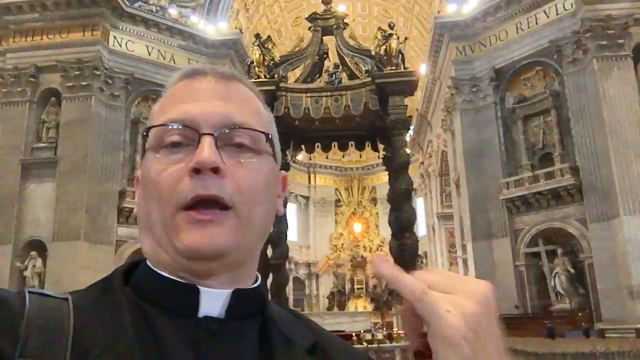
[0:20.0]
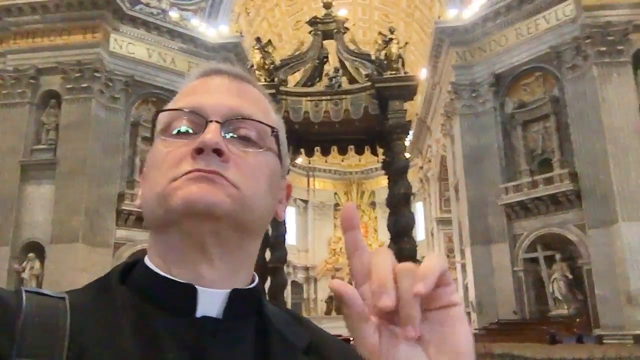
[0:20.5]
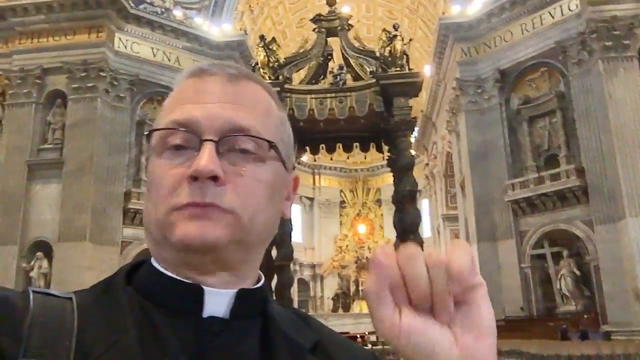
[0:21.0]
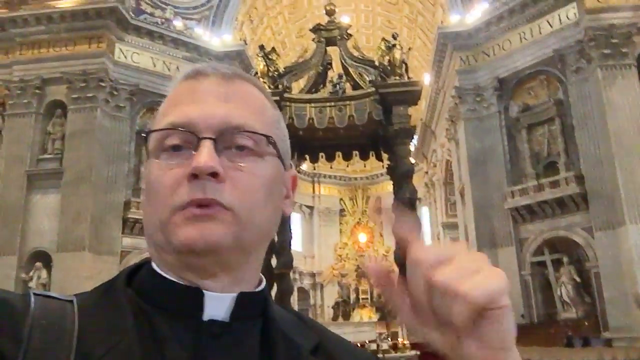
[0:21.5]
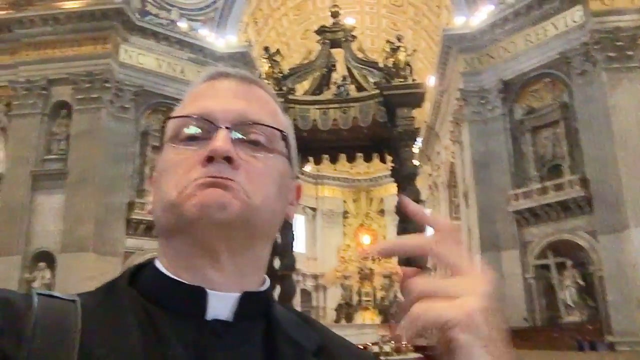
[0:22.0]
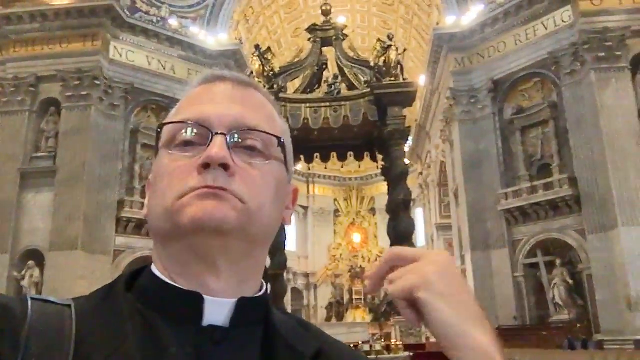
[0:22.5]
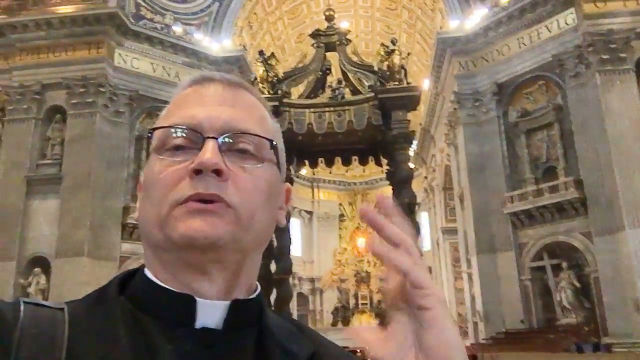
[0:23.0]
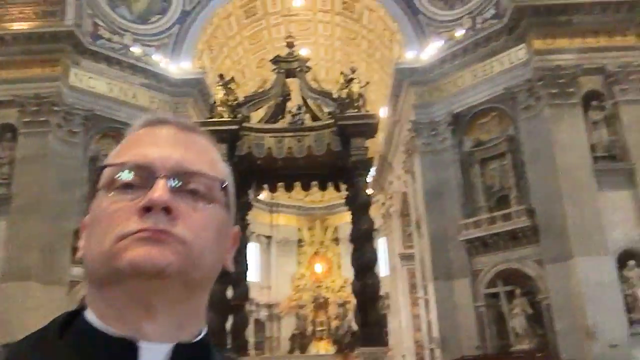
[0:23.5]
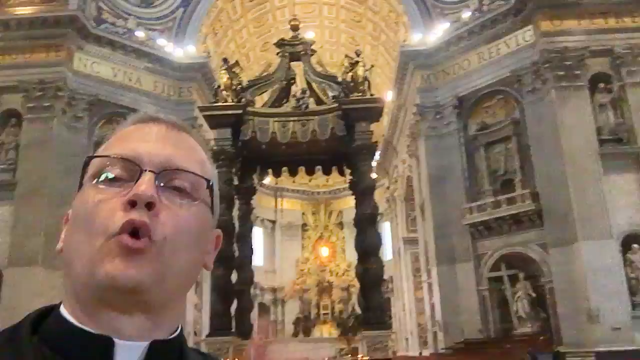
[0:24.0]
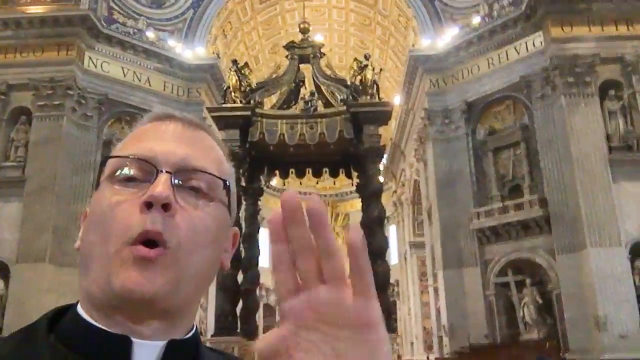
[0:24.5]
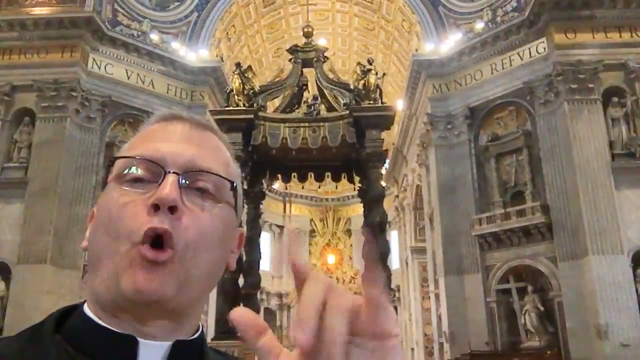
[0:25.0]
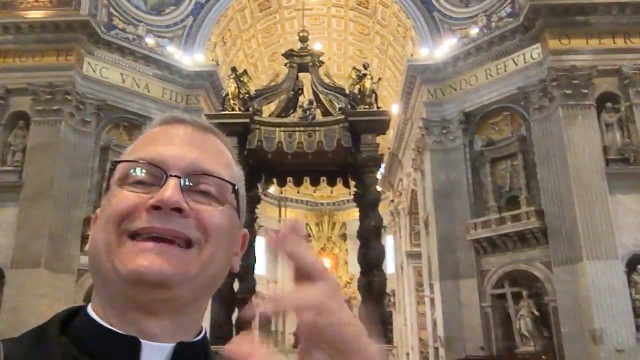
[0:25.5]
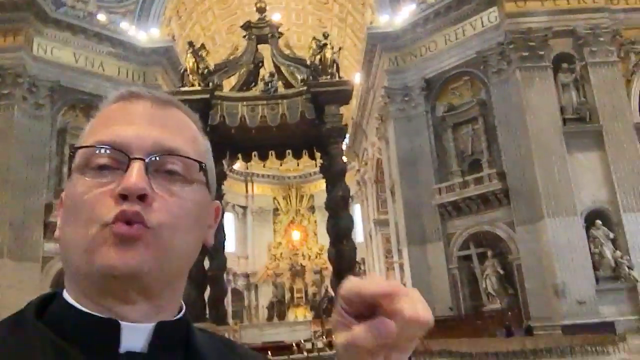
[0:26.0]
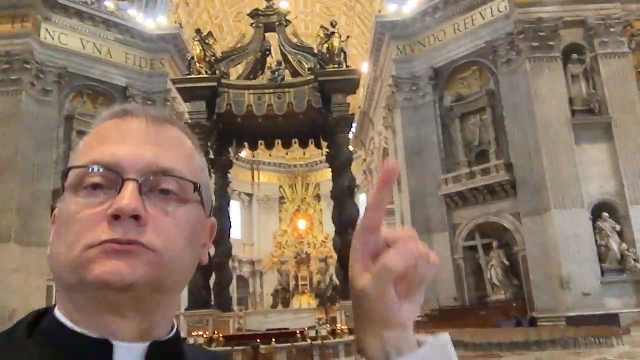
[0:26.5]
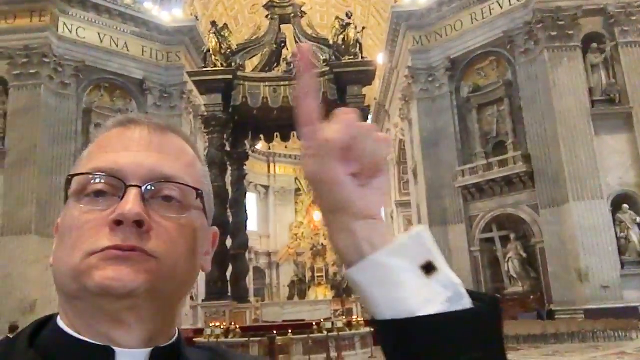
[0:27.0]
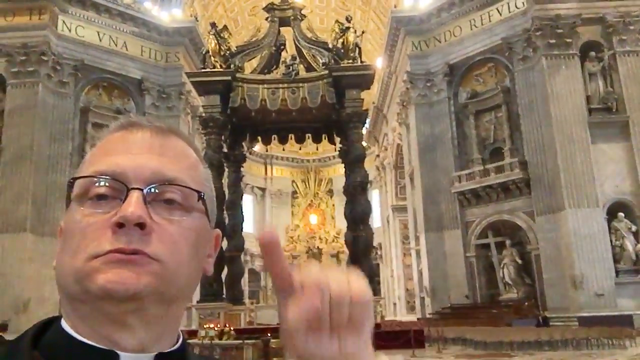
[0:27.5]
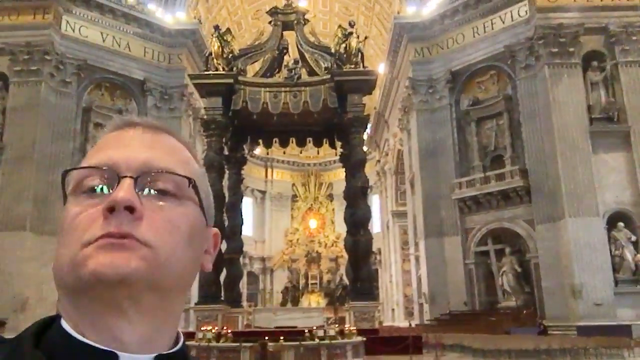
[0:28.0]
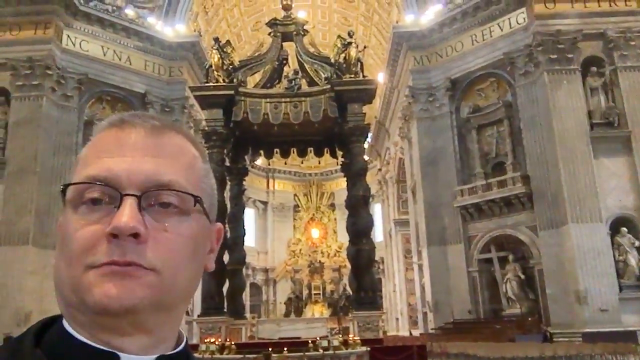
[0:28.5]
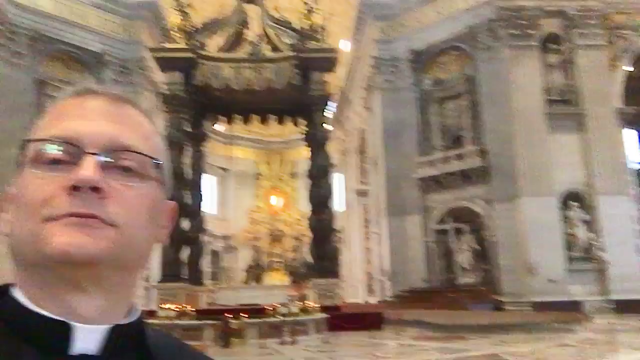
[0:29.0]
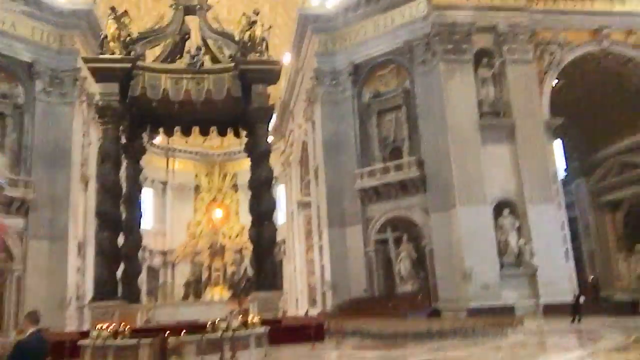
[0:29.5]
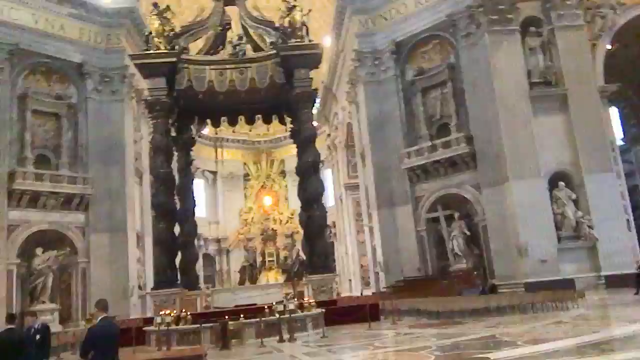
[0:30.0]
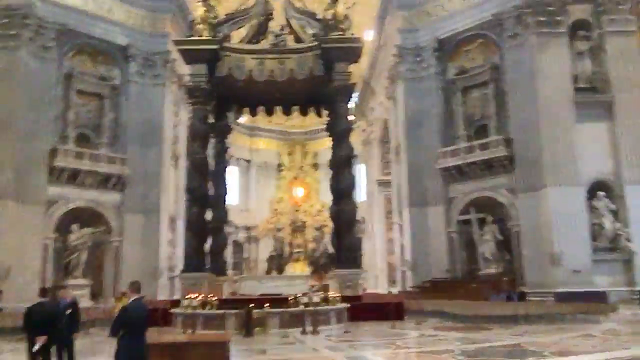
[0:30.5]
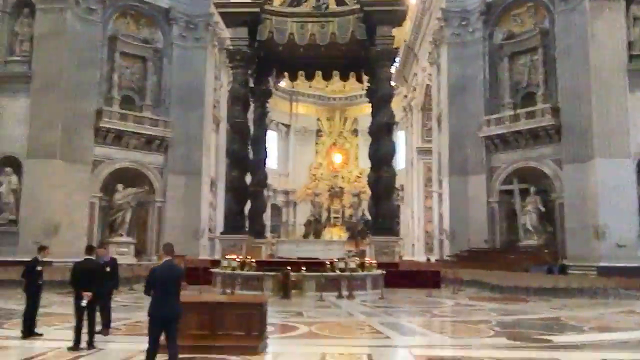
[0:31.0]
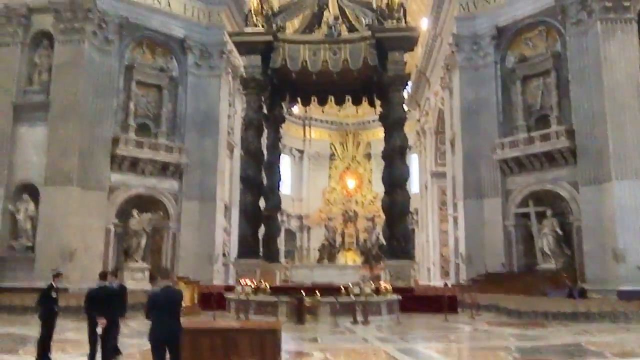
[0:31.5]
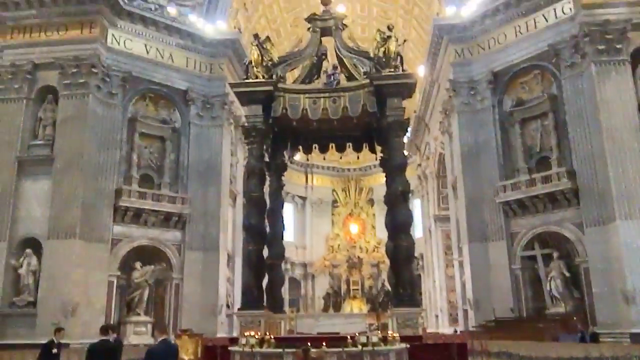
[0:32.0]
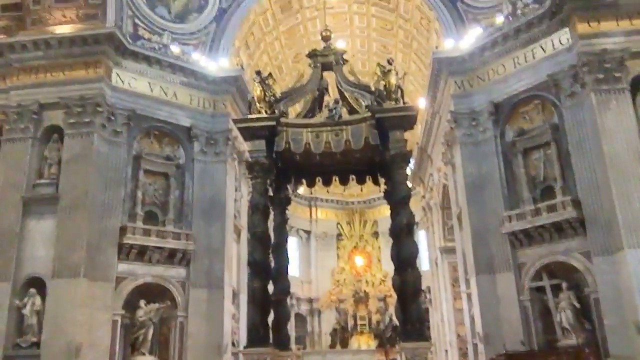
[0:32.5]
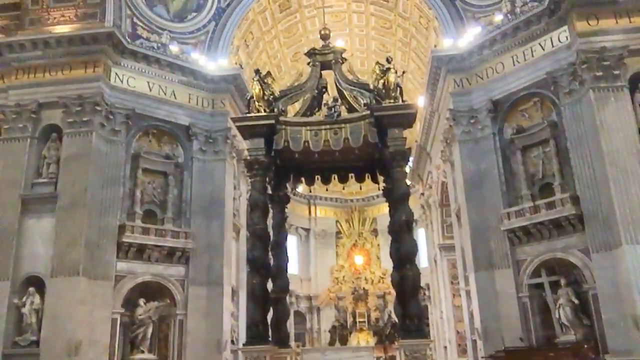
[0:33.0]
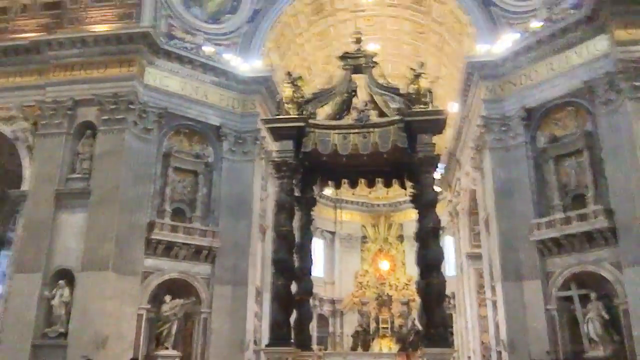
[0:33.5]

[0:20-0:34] A priest in a cathedral uses sign language while moving his mouth at the same time, describing the structure behind him. The structure has four columns and a top, is very intricately crafted, and has steps leading up to it. Statues stand on its roof; only the front is visible, so two can be seen. The cathedral has a vaulted ceiling, gold statues in the background, and gold trimming on walls that appear to be marble or lime.